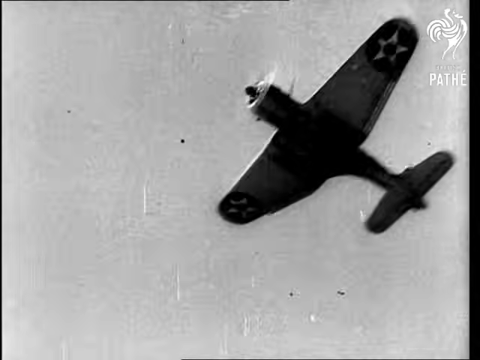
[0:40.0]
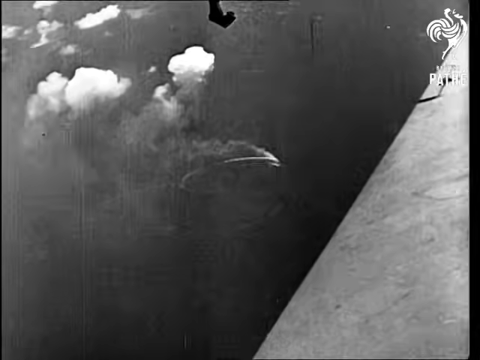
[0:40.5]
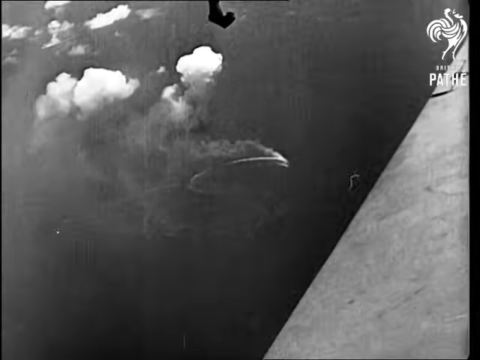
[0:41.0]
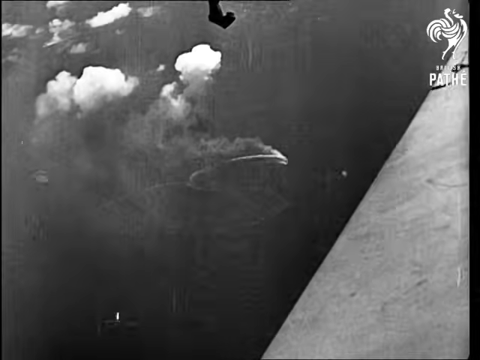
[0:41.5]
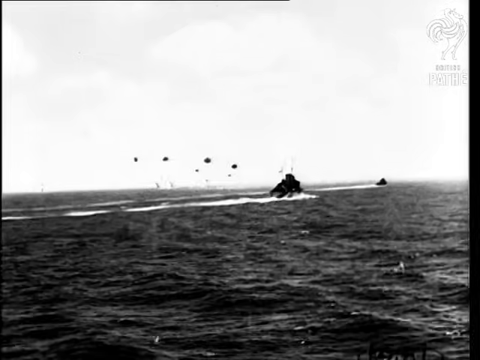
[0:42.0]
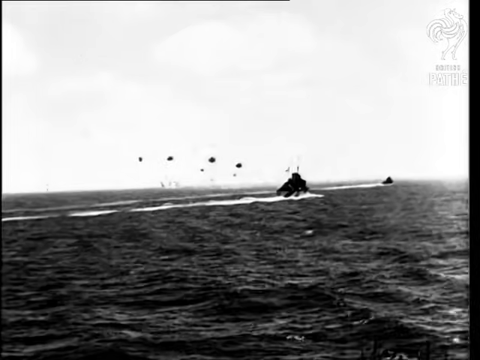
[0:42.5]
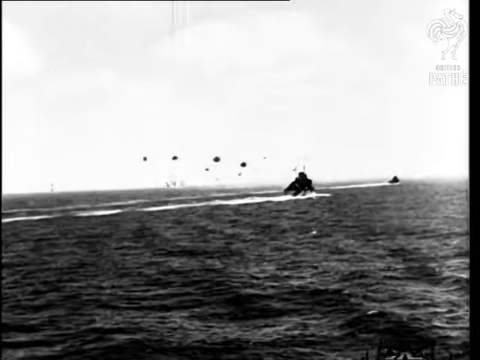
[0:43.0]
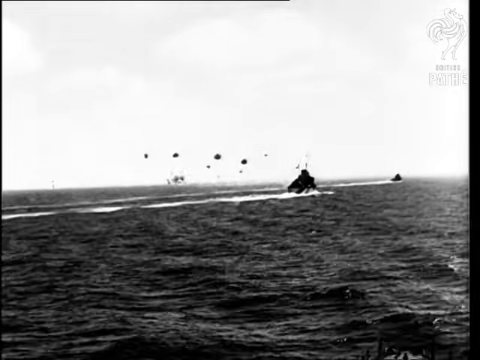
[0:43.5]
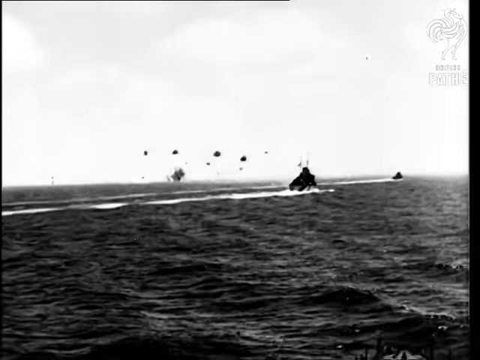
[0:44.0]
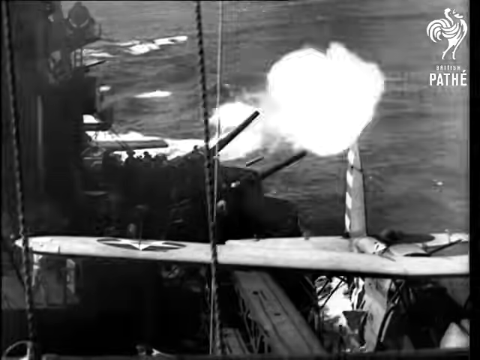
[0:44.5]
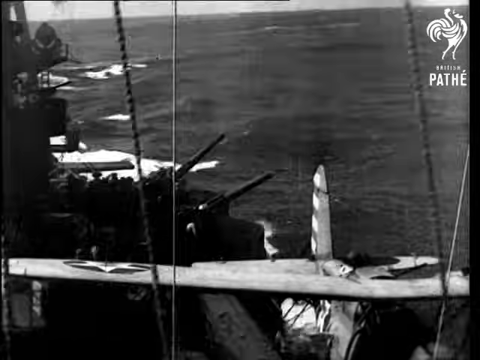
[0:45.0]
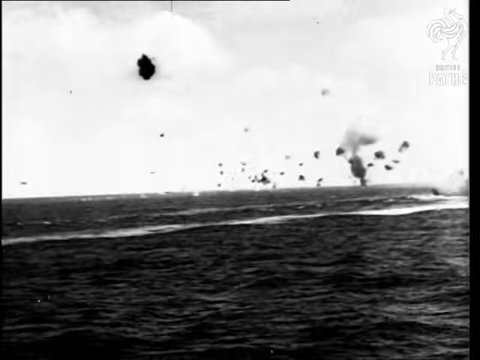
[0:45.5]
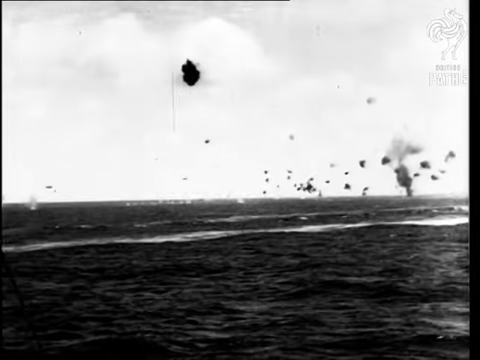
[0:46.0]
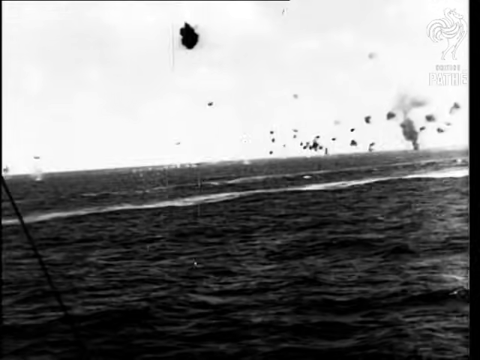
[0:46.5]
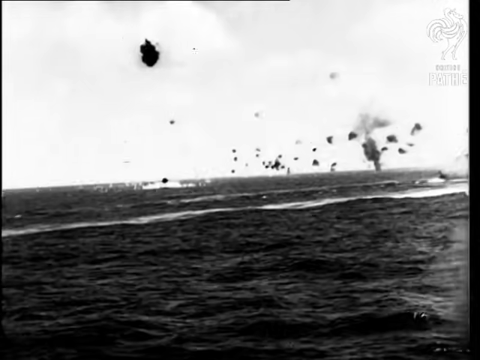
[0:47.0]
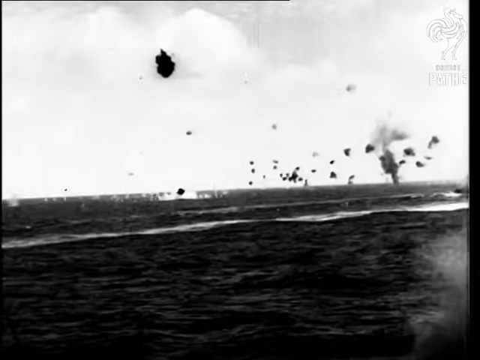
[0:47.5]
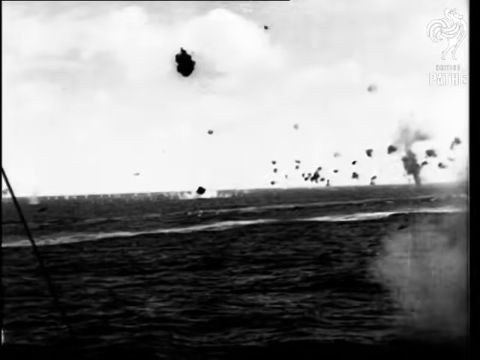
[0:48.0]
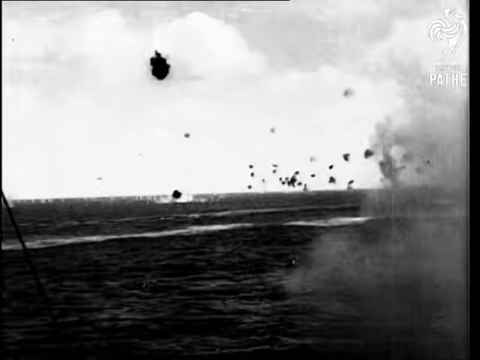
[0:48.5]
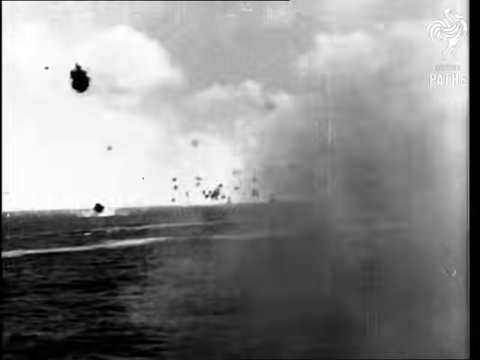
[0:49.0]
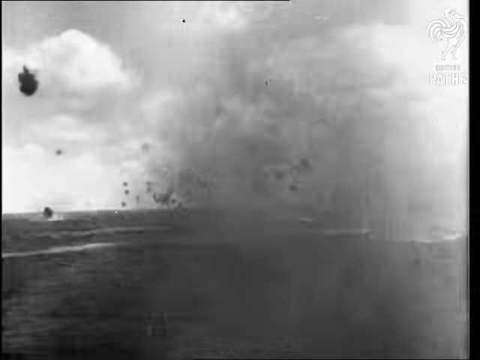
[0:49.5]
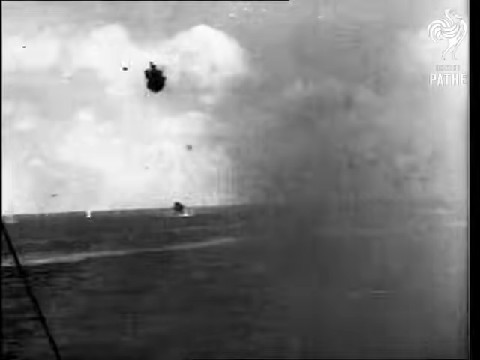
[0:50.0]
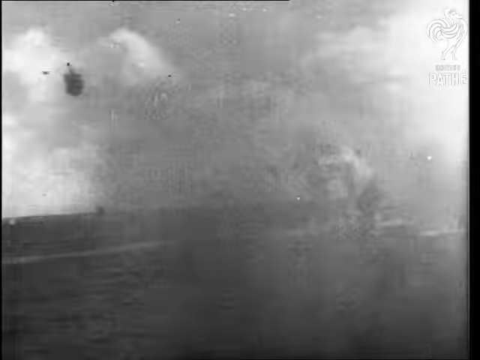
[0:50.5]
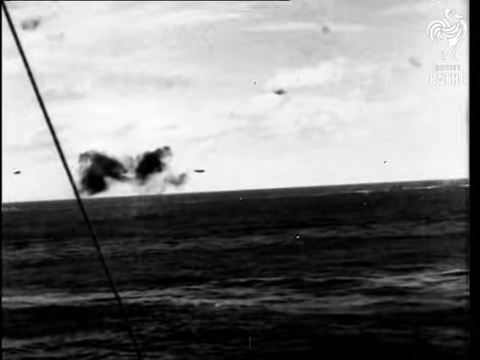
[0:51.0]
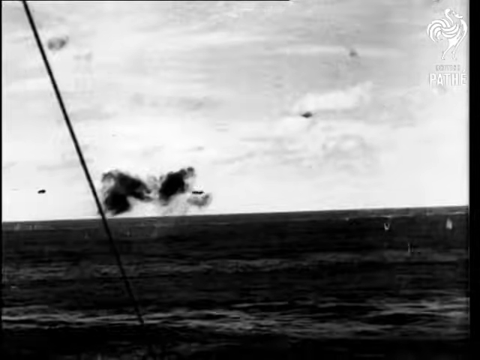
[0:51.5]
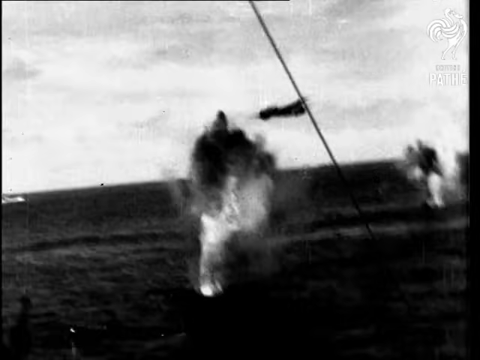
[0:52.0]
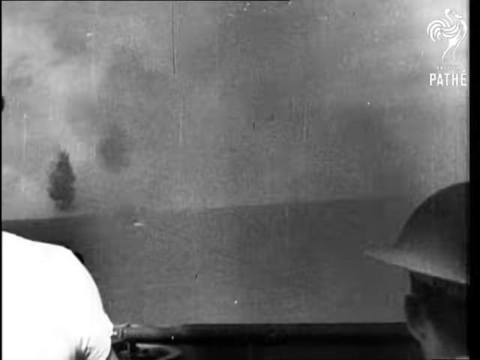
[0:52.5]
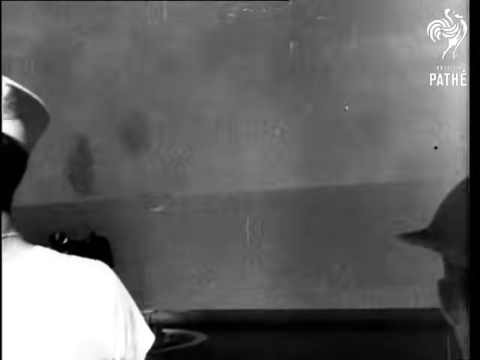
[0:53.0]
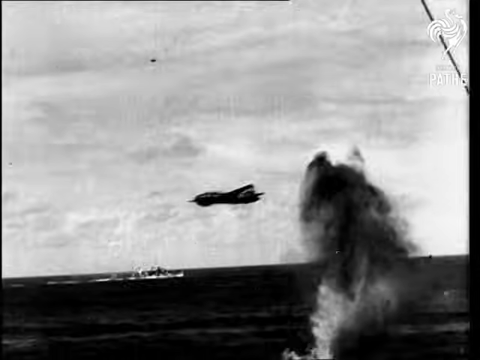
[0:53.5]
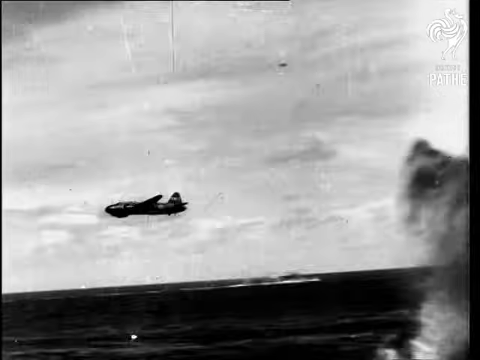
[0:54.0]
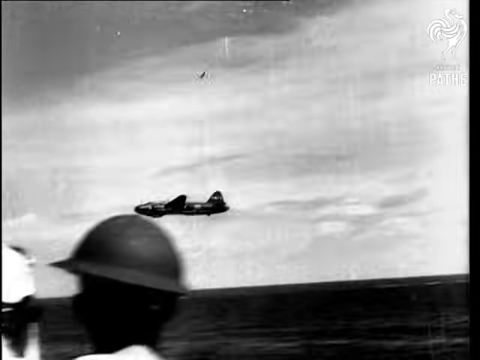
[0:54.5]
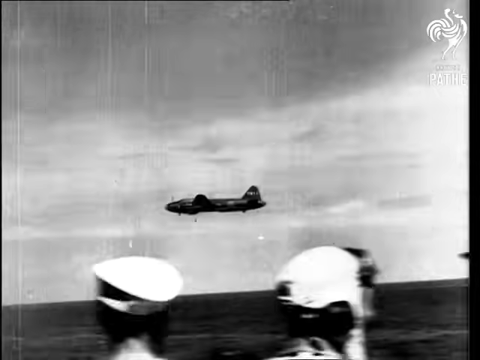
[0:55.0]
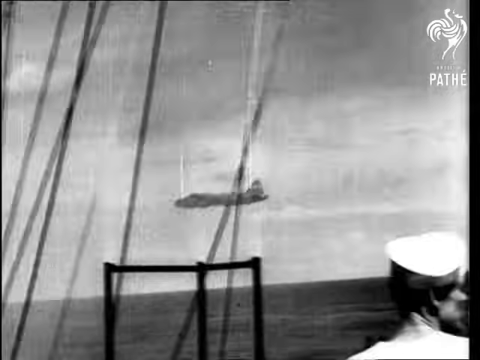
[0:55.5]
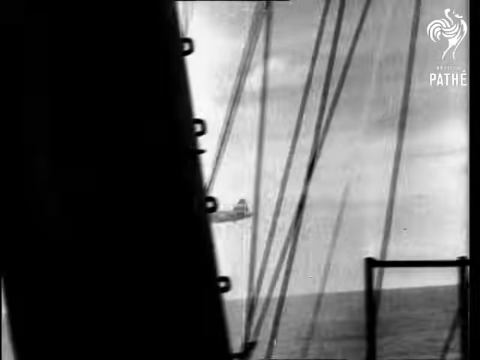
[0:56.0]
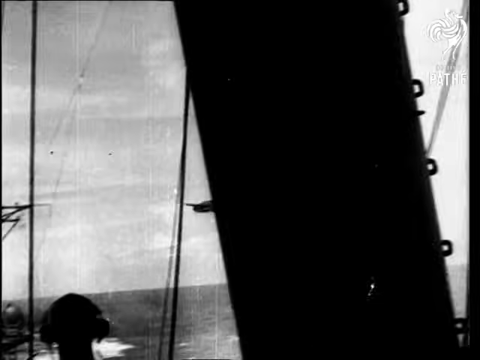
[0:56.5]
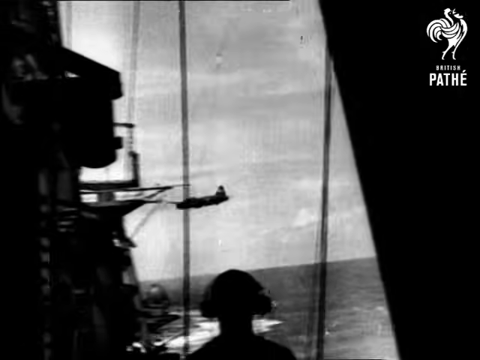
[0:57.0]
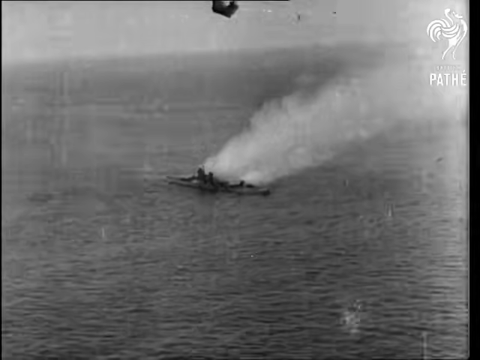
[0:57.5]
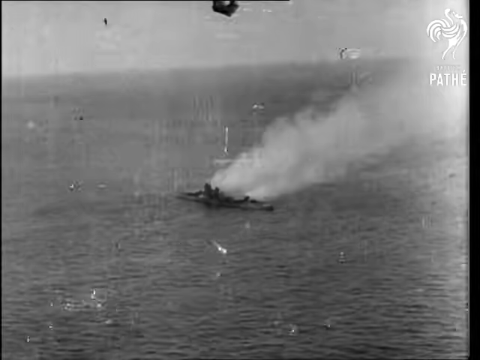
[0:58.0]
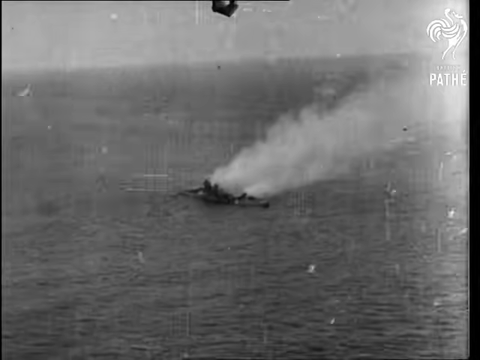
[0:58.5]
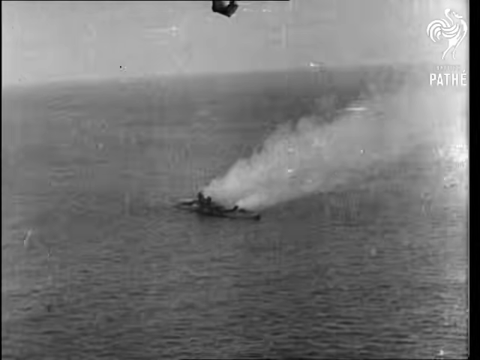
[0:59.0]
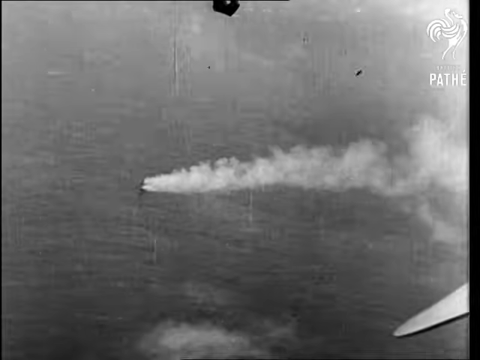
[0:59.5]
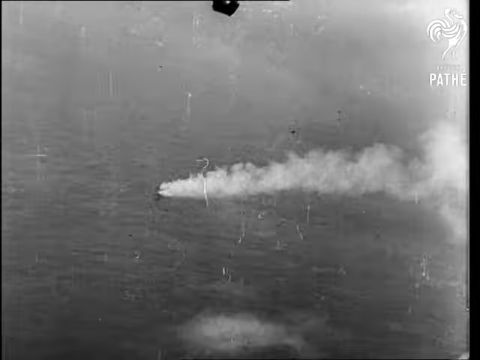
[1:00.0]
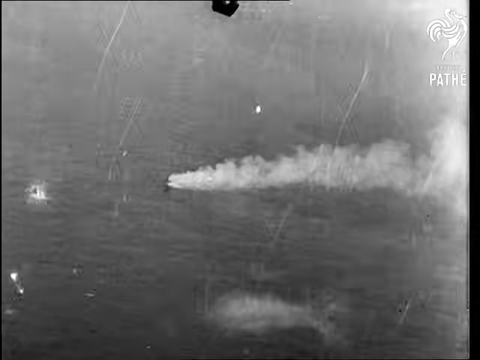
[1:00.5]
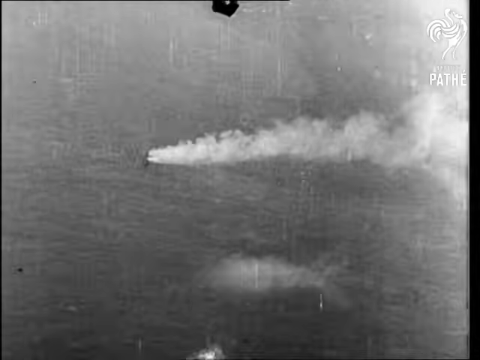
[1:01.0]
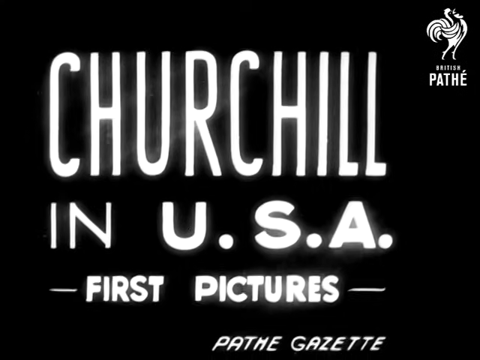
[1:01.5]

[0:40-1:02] In black and white, the camera looks upward at the underbelly of an airplane flying toward the top left, following the airplane as it flies over. The video then seems to show an image looking down from the air, with some clouds. Another image appears to show some ships on an ocean with white waves behind them, moving from left to right, and some black smoke in the air. A black-and-white scene then shows what looks like two cannons on the side of a ship, pointed up and firing to the right. Next comes a scene with a lot of black smoke over the ocean that looks like anti-air fire: around 20 to 30 little black puffs of smoke over the surface of the water. The camera pans to the right, and there appear to be more explosions in the water. An airplane flies from right to left over a deck, where some people stand facing the camera and looking at it. An aerial scene then shows what looks to be a battleship in the water with a lot of smoke coming out of it, seen from above, positioned from left to right and heading toward the bottom right. Another aerial scene, from further away, shows more white smoke coming out of the ship. At the end, white text reads "Churchill in USA, first pictures."